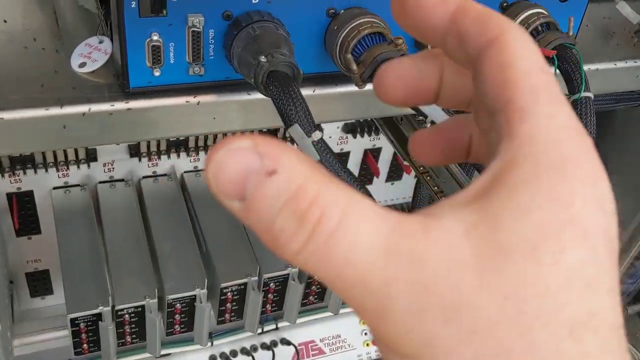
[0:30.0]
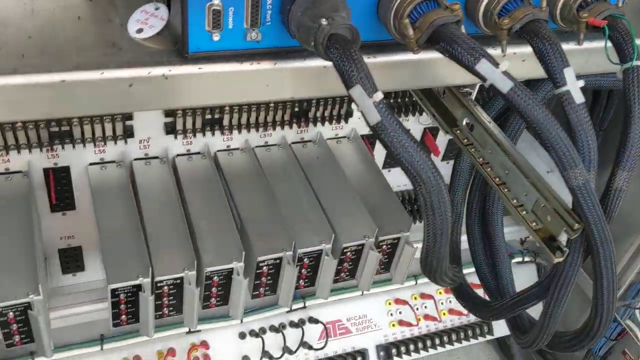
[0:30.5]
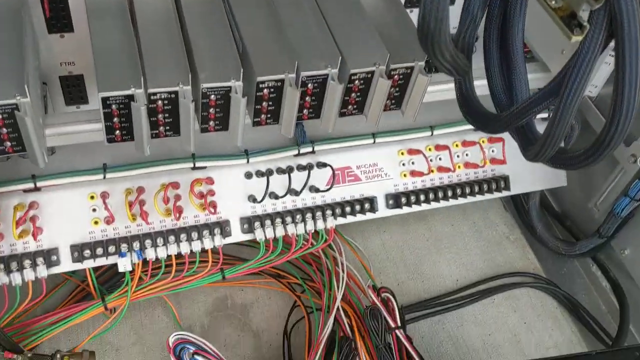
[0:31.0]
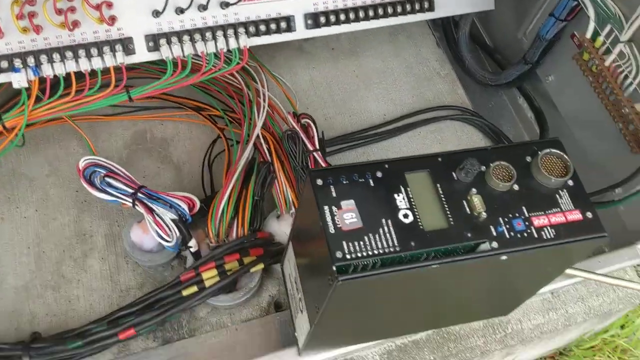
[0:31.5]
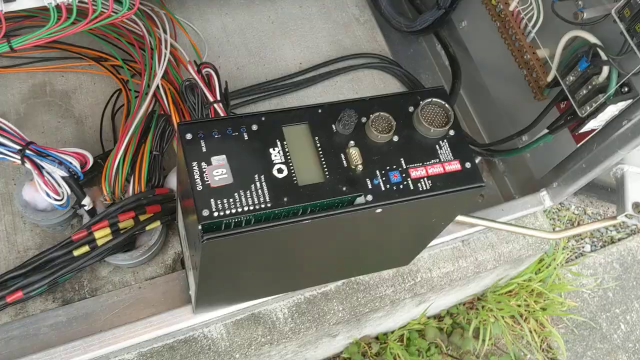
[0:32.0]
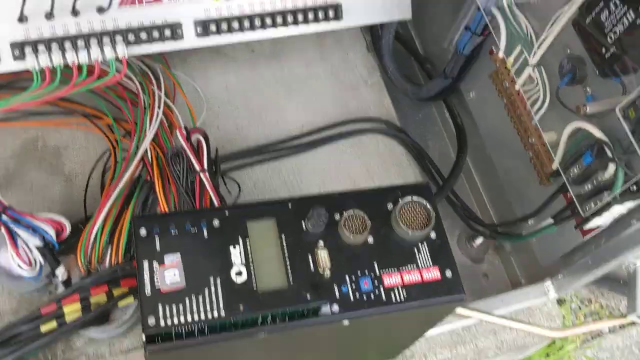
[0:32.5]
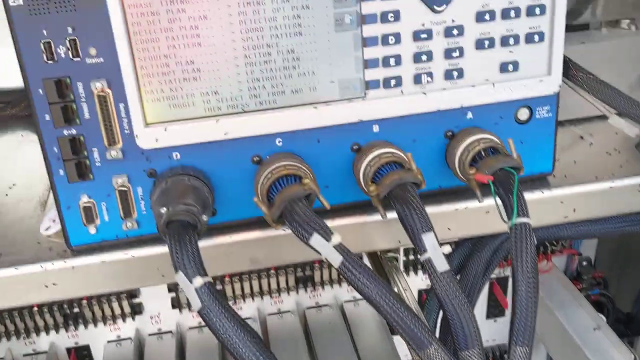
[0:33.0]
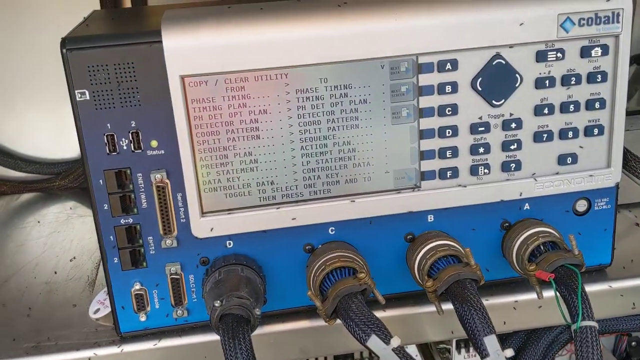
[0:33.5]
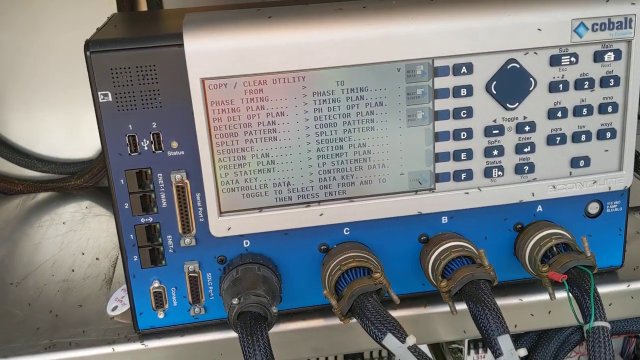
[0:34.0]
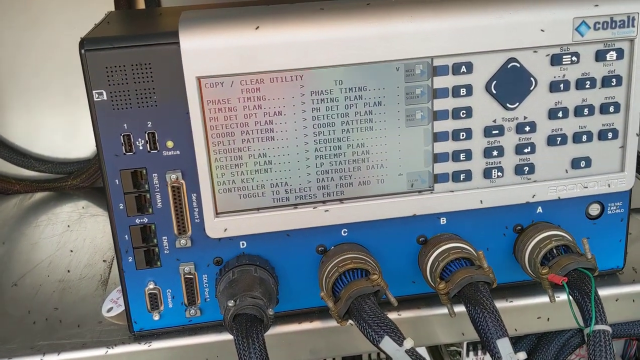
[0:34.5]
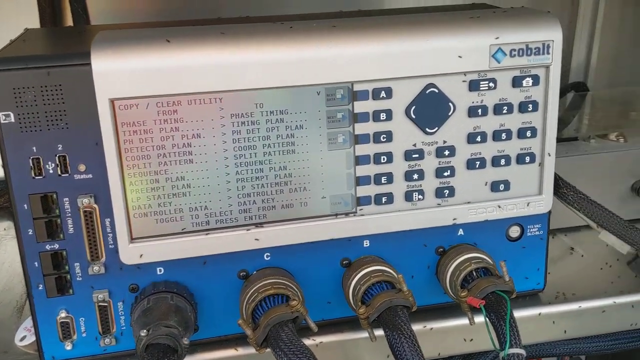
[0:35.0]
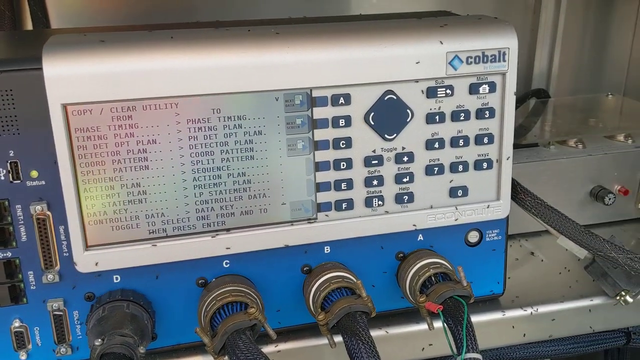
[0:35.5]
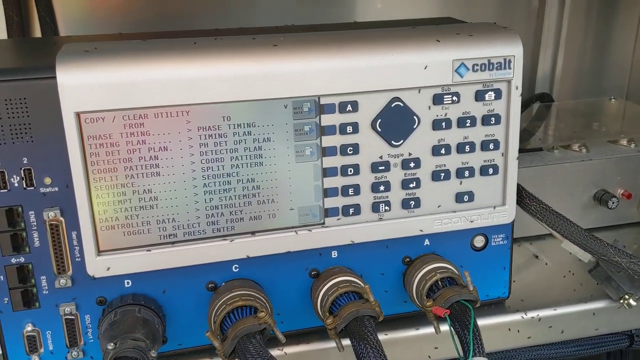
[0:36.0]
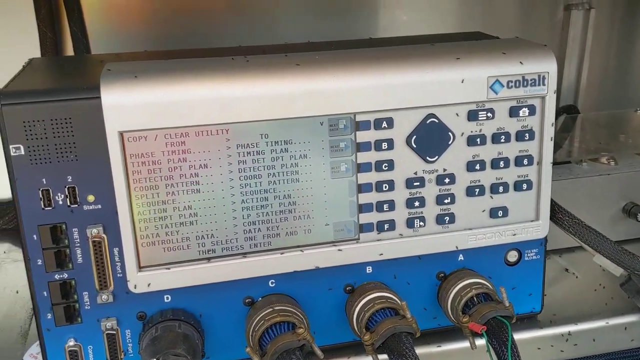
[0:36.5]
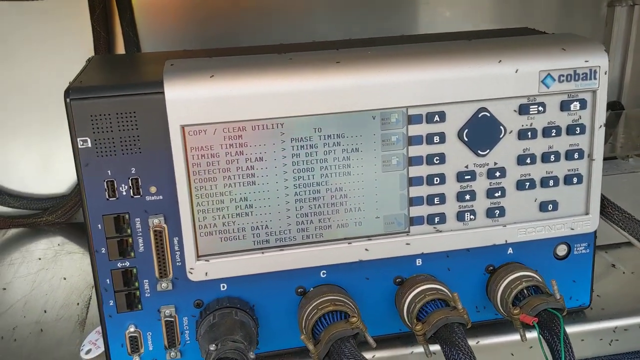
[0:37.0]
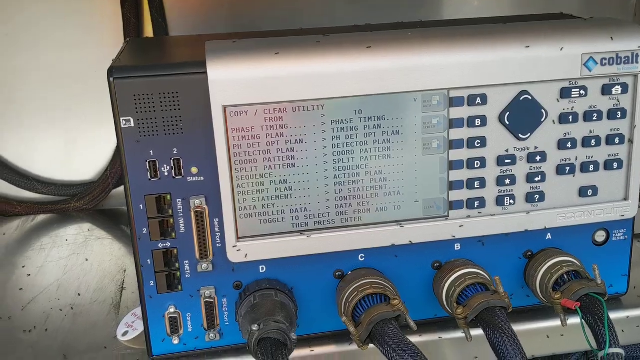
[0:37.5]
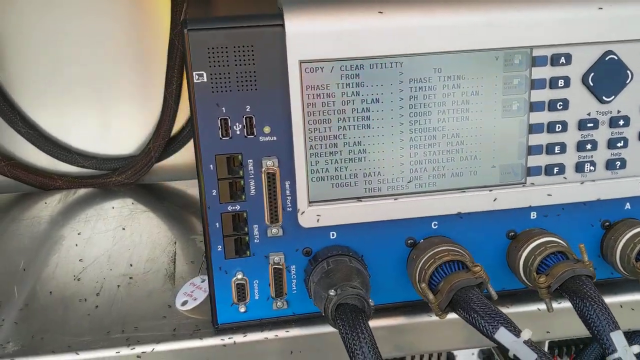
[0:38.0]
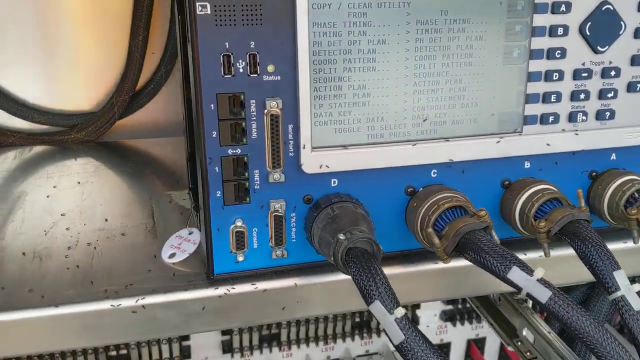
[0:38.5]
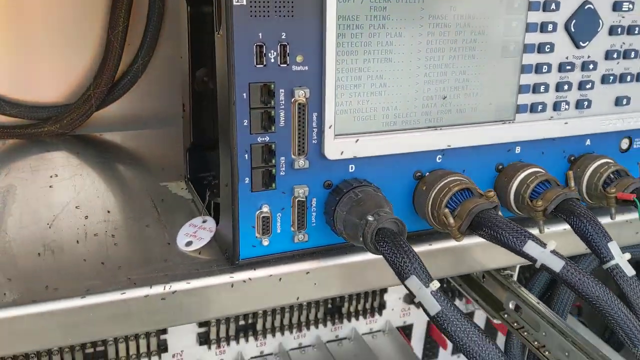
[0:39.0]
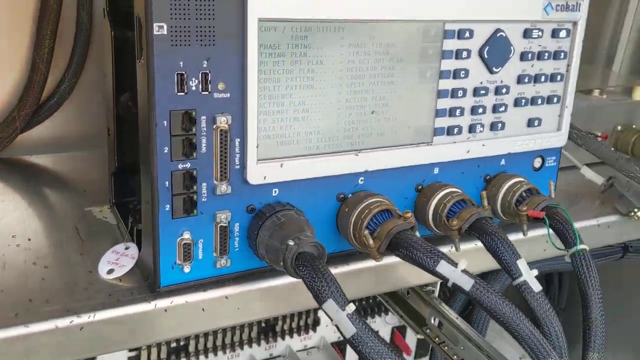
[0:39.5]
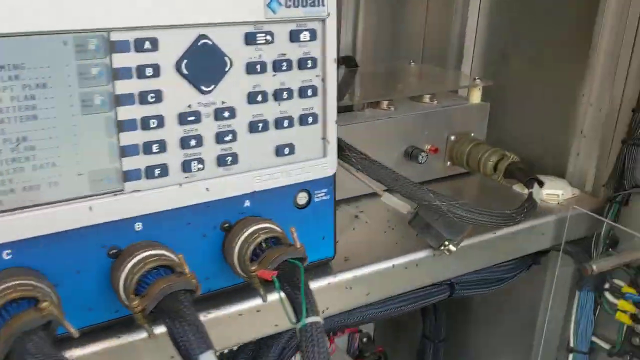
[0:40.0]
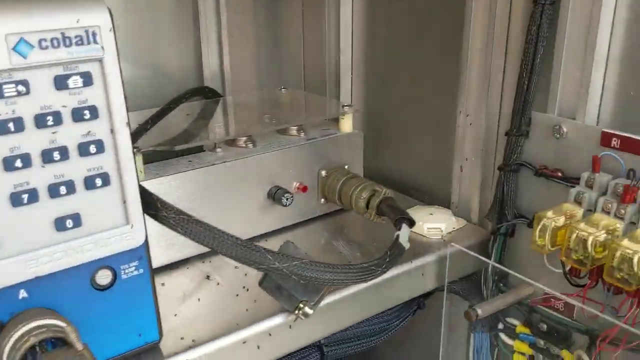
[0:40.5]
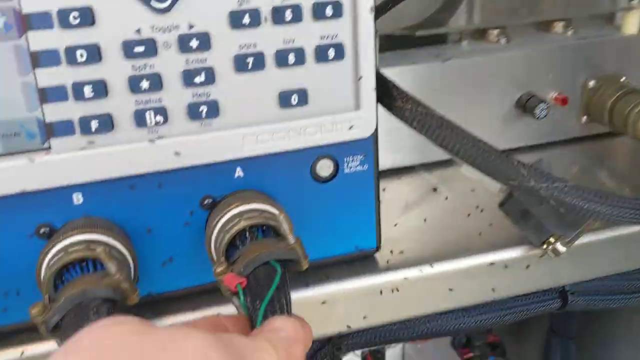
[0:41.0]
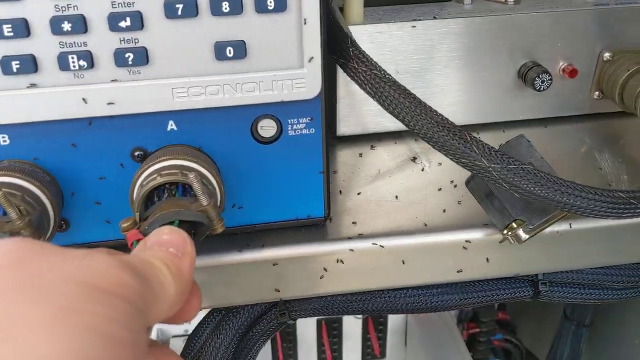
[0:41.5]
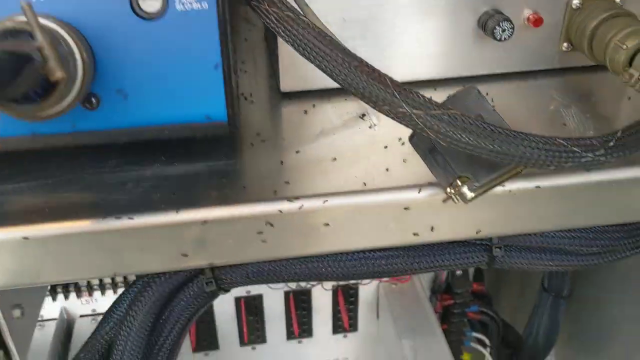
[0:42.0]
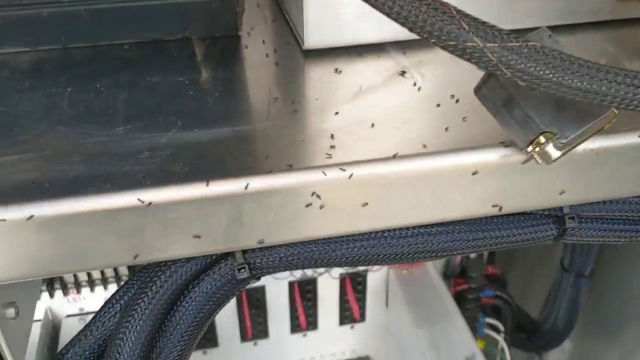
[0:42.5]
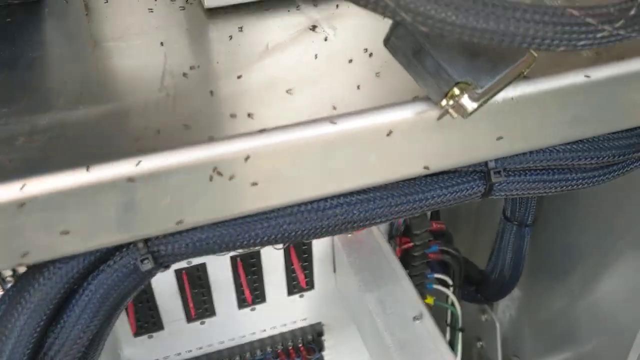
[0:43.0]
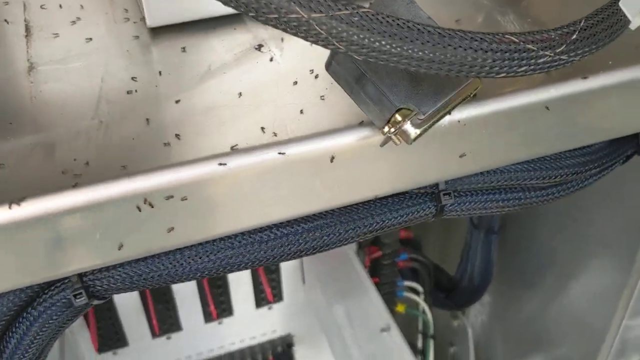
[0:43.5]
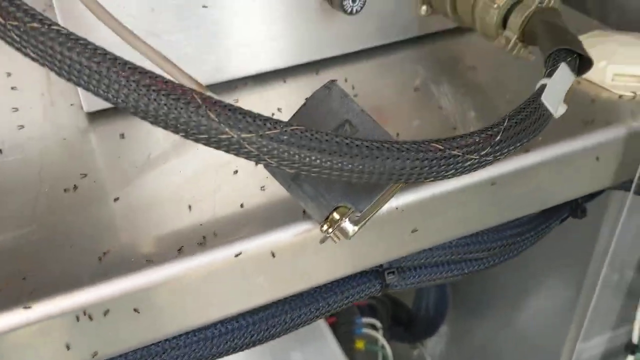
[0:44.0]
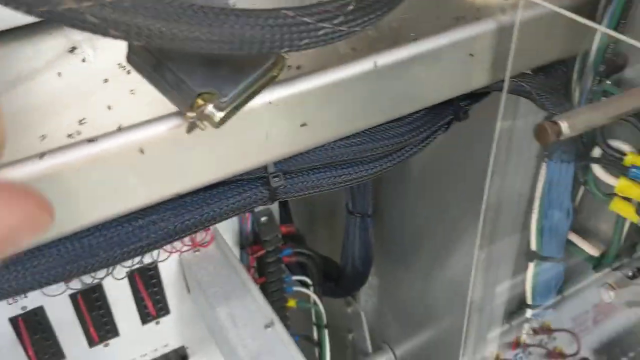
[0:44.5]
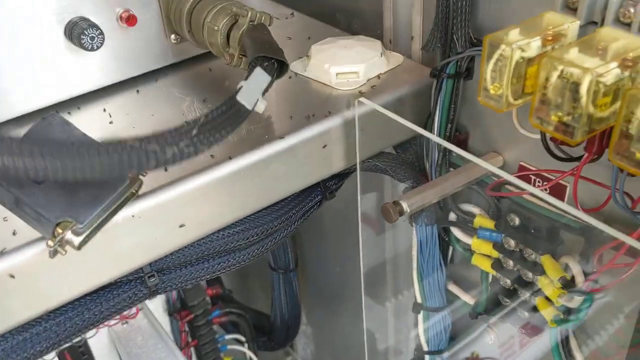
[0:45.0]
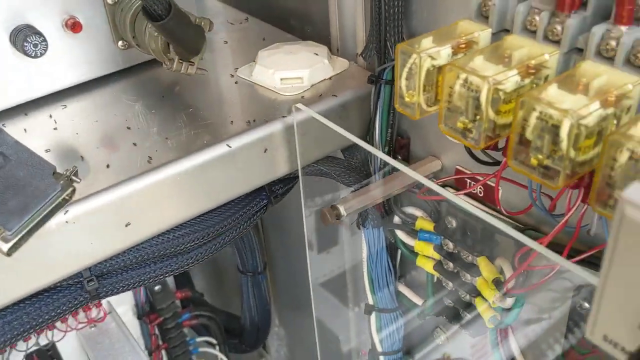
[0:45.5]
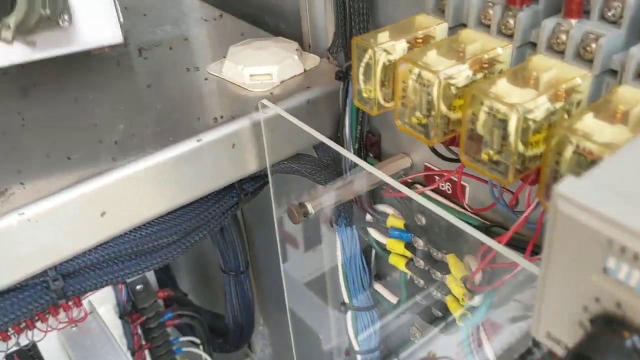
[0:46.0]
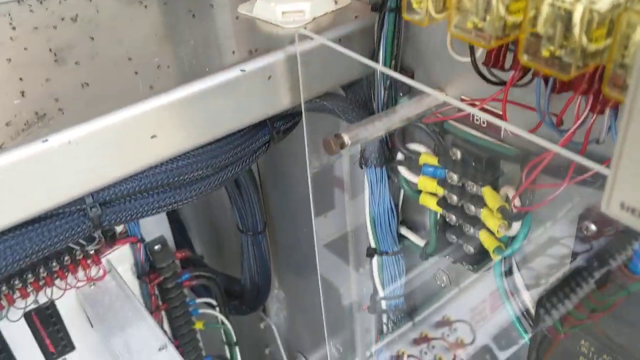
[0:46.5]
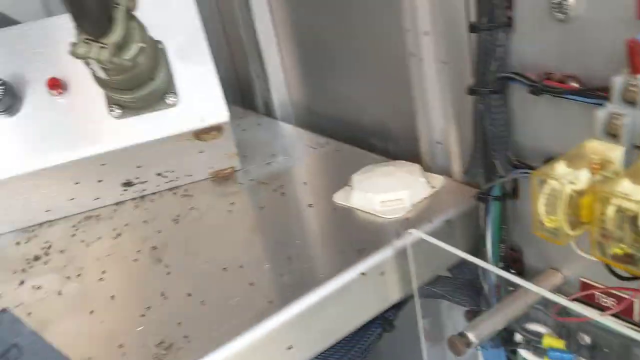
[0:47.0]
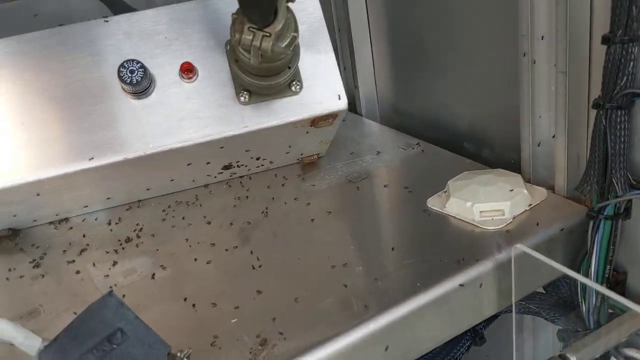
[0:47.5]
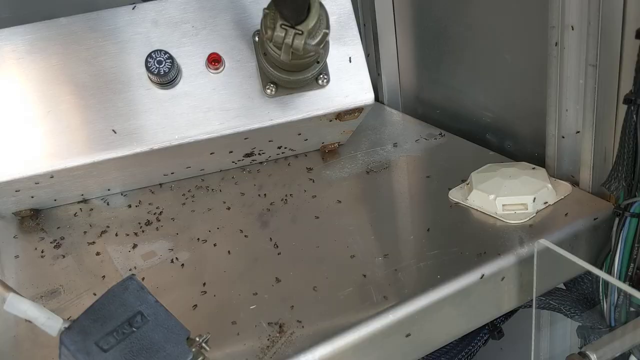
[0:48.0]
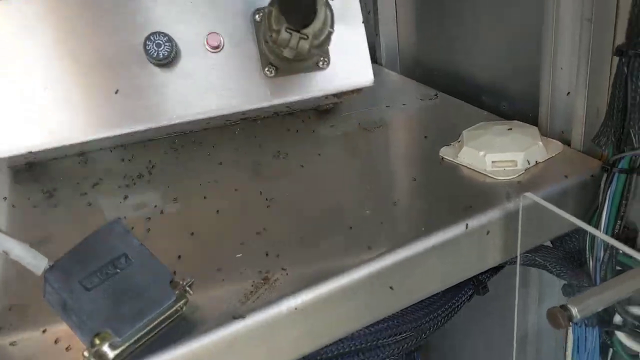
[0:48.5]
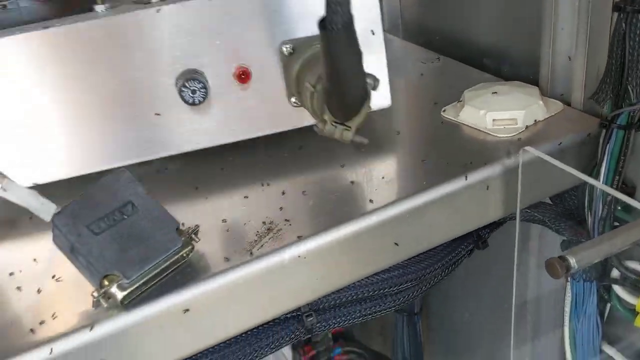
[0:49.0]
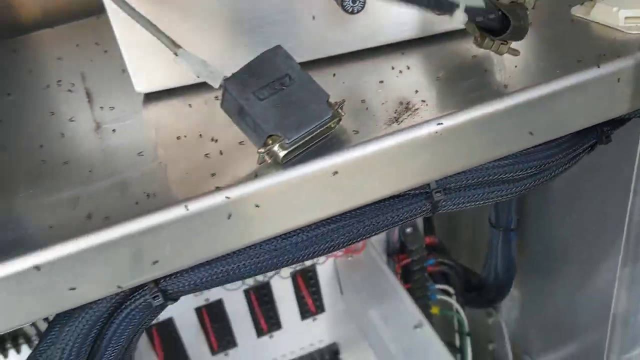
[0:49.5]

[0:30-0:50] The machine is shown in detail. It is labelled "Cobalt", spelled C-O-B-A-L-T. A man's hand, apparently a white man's, appears to touch the machine and move it to show the ants underneath. The ants are everywhere: on the table, on the machine, under the machine, and moving below the table the machine is on. There are wires everywhere, below and attached to the machine. The machine is blue, with multi-colored cords attached to it. The black ants appear everywhere, and the hand moves around the machine to show where and in what direction the ants are moving.